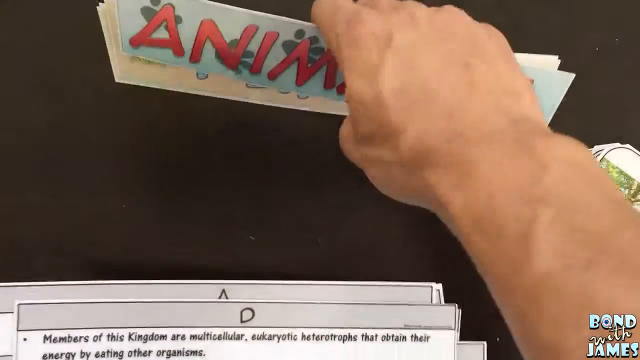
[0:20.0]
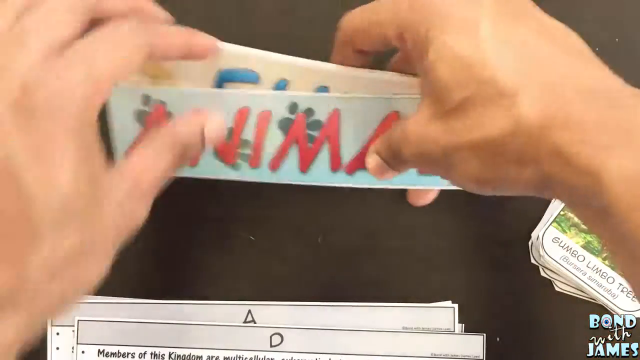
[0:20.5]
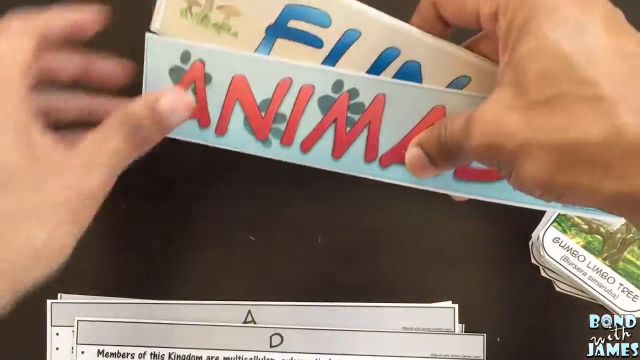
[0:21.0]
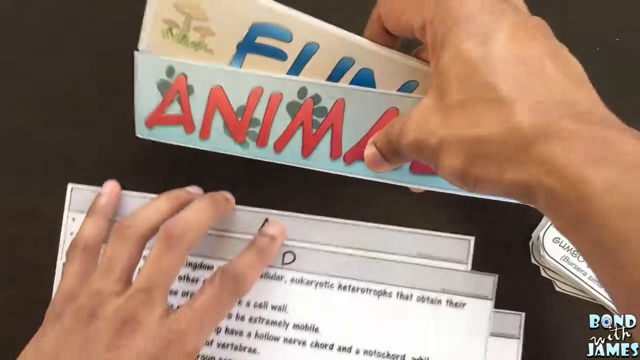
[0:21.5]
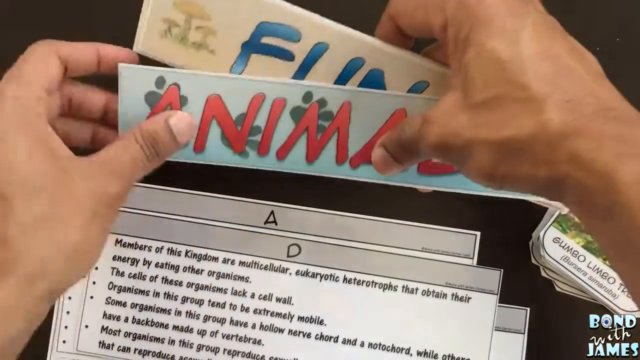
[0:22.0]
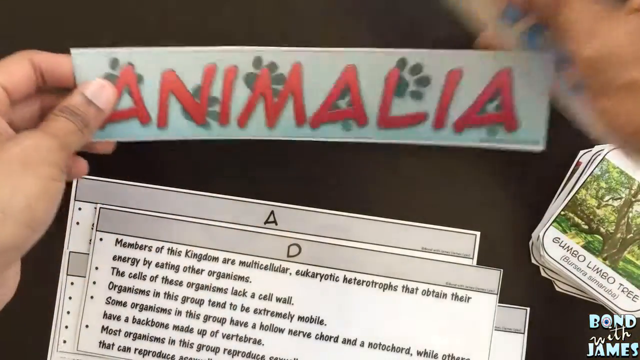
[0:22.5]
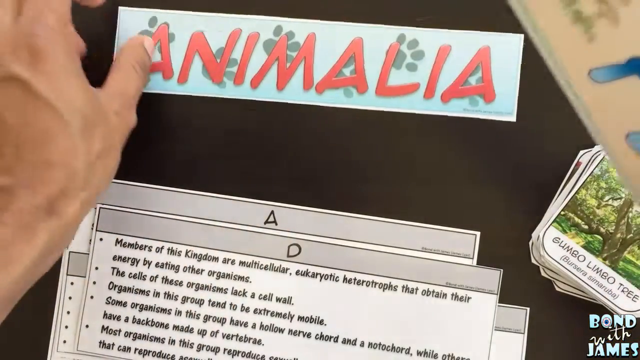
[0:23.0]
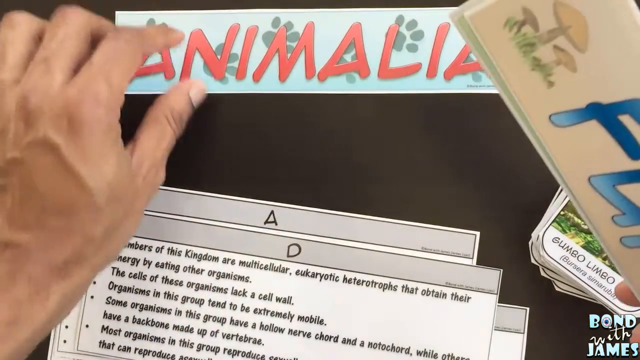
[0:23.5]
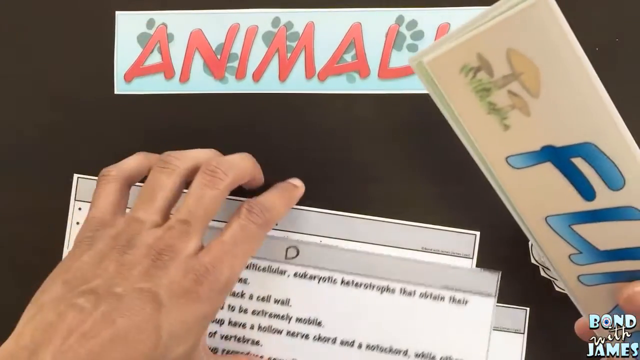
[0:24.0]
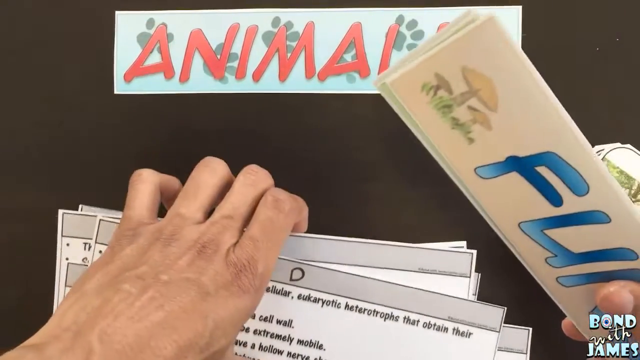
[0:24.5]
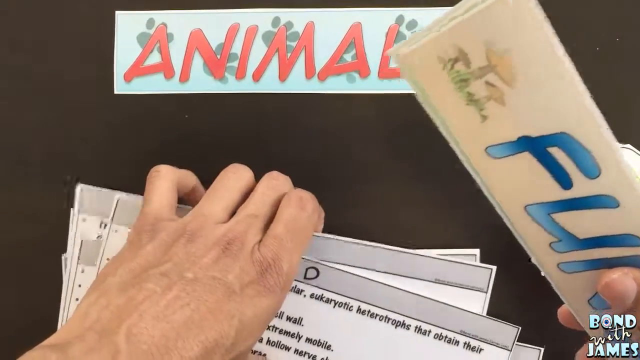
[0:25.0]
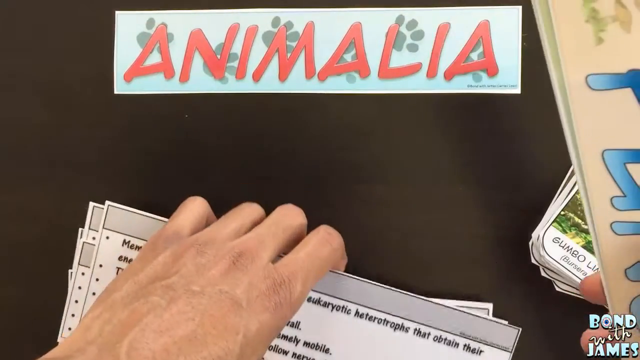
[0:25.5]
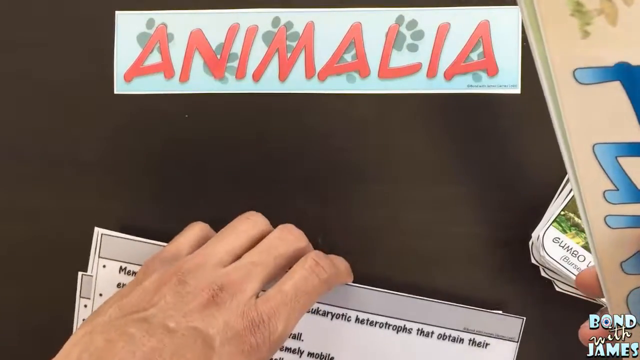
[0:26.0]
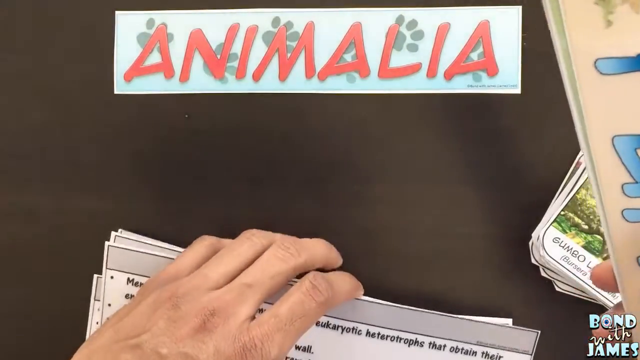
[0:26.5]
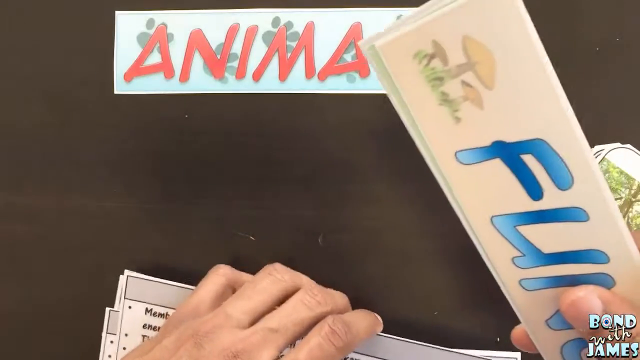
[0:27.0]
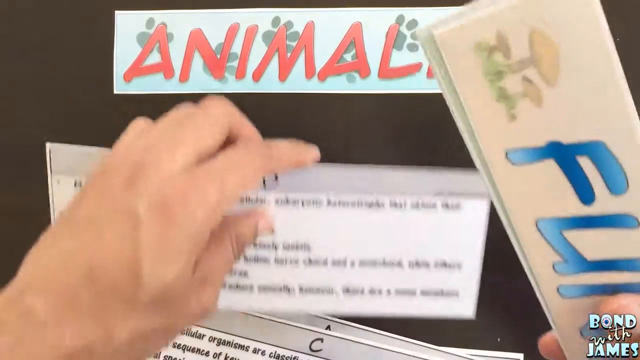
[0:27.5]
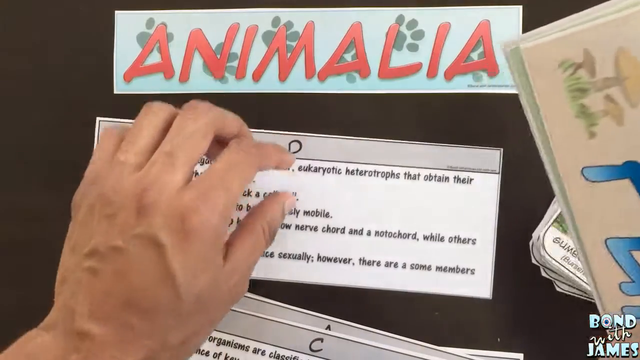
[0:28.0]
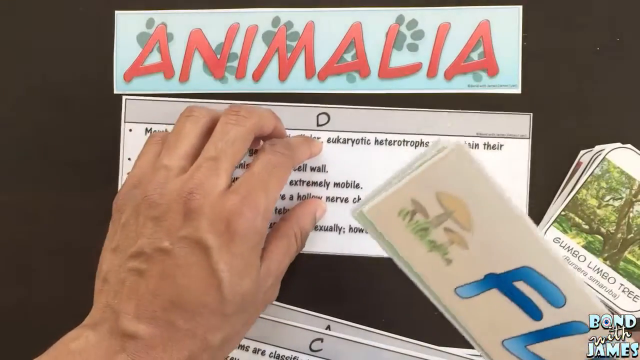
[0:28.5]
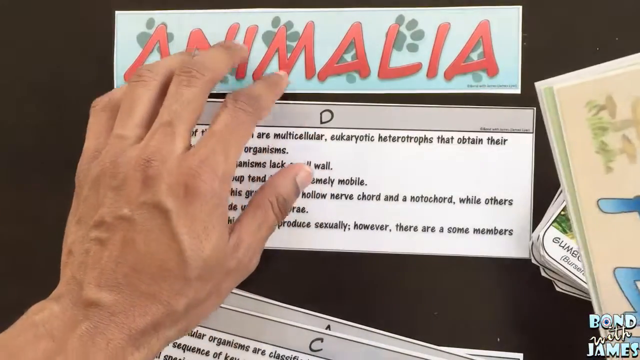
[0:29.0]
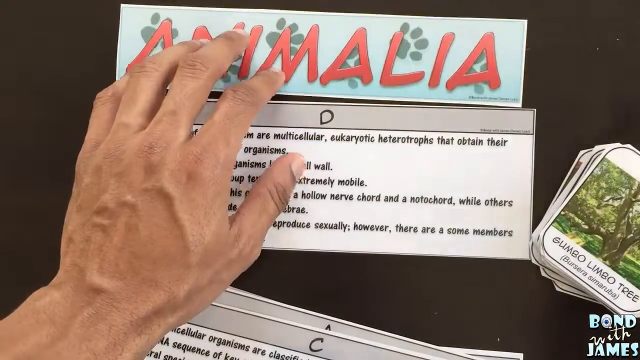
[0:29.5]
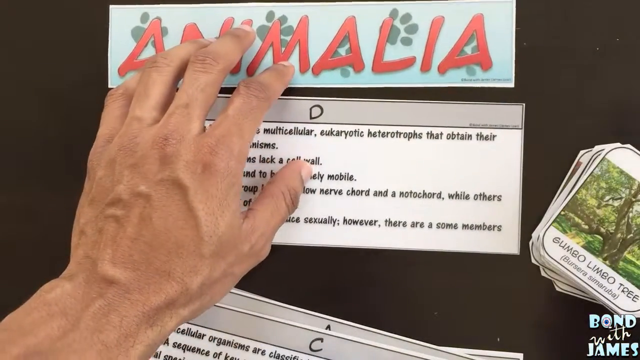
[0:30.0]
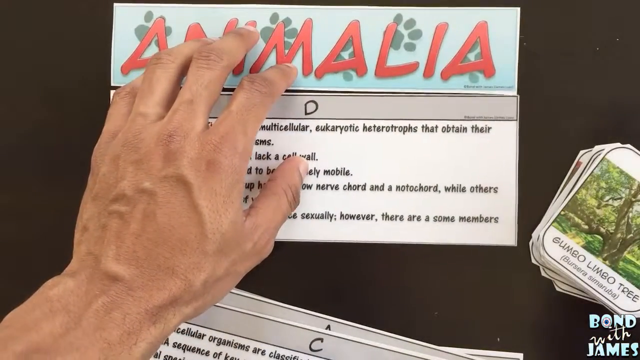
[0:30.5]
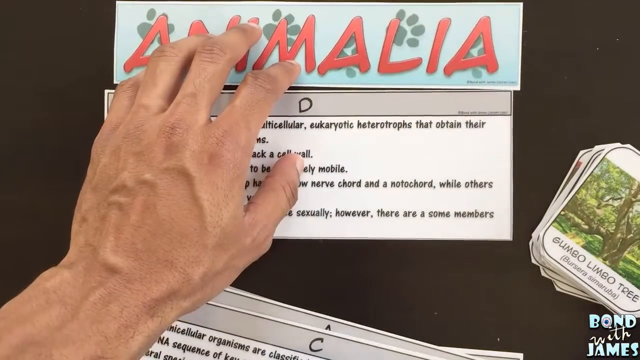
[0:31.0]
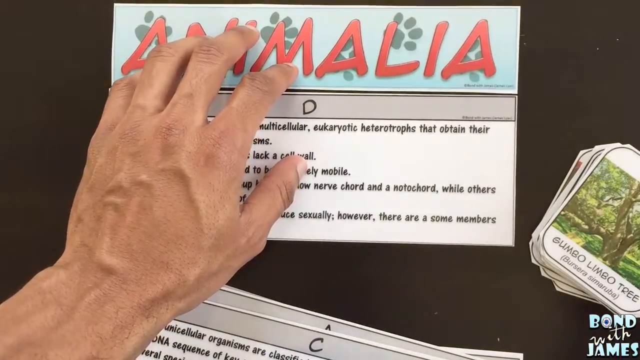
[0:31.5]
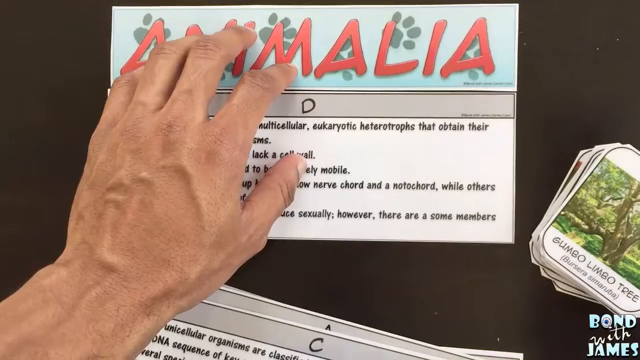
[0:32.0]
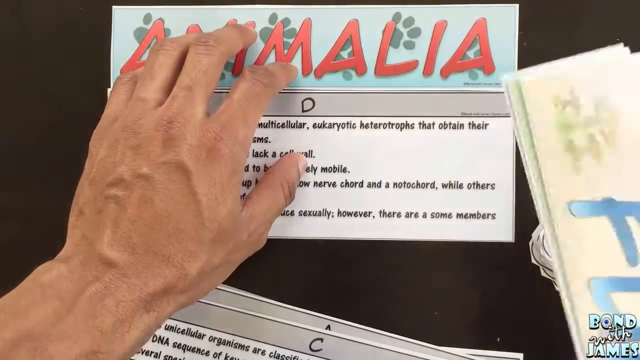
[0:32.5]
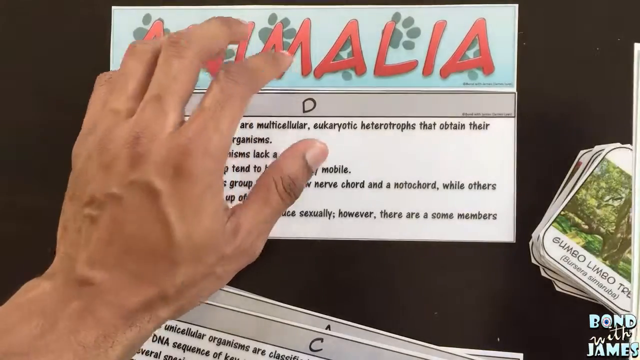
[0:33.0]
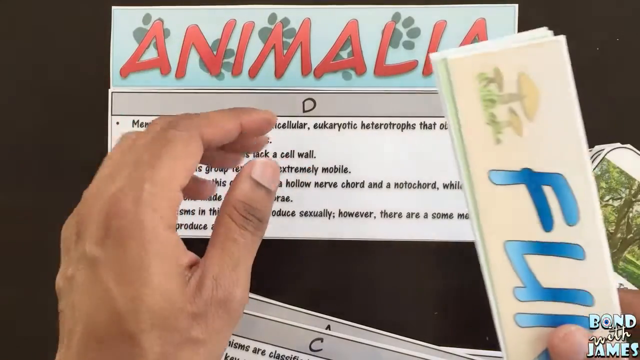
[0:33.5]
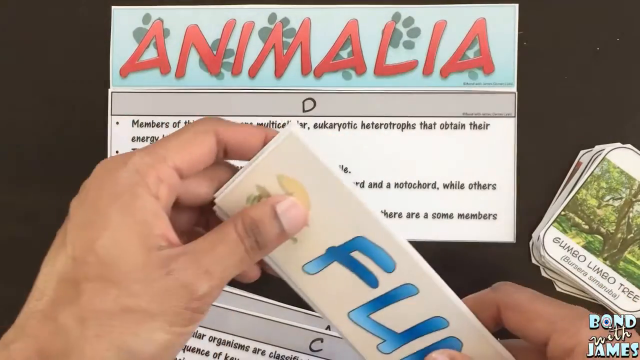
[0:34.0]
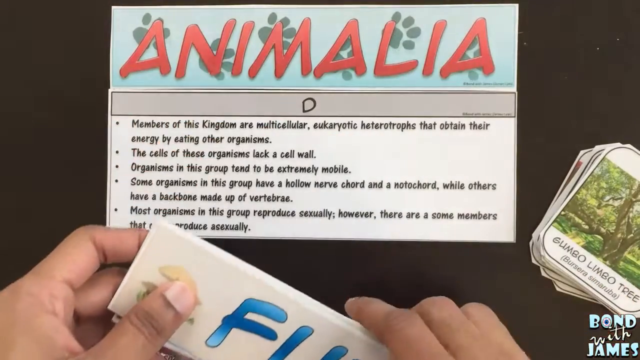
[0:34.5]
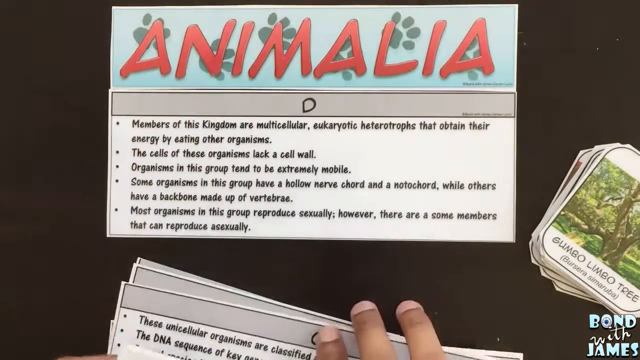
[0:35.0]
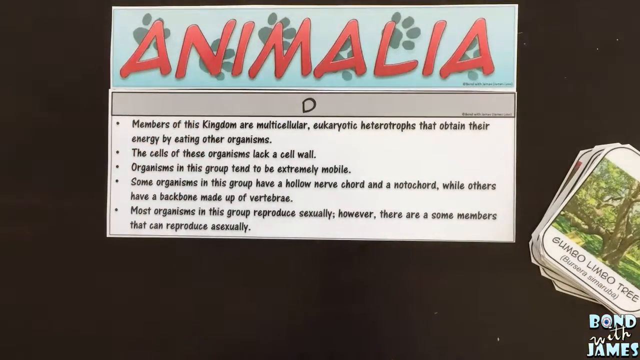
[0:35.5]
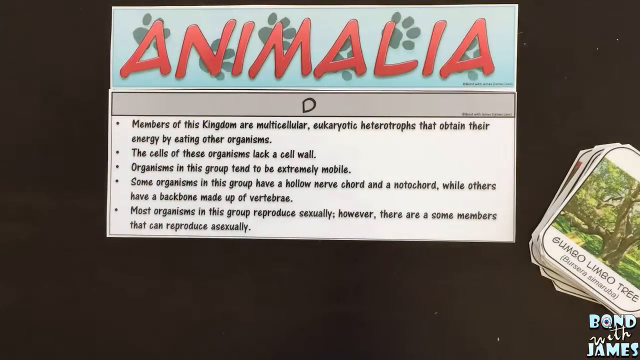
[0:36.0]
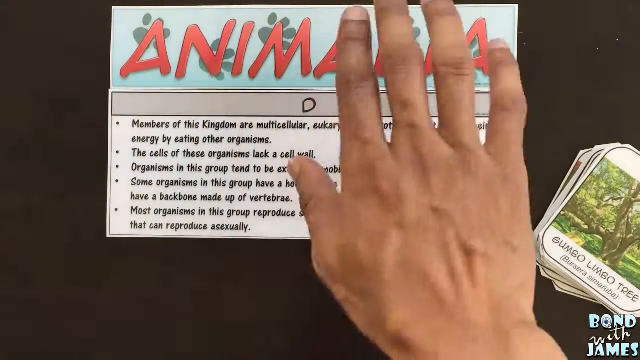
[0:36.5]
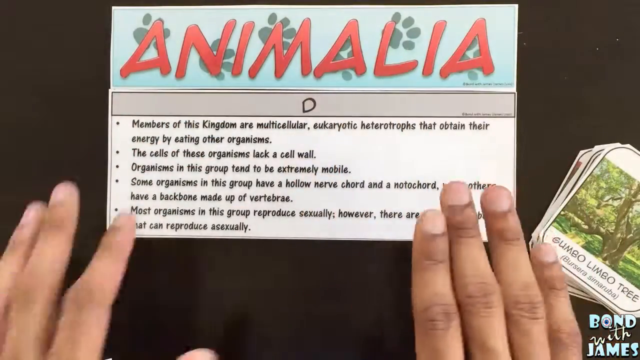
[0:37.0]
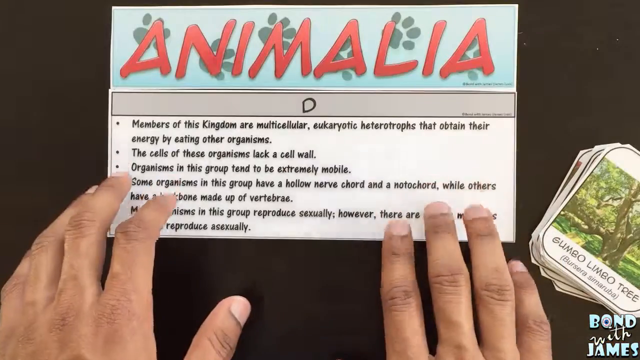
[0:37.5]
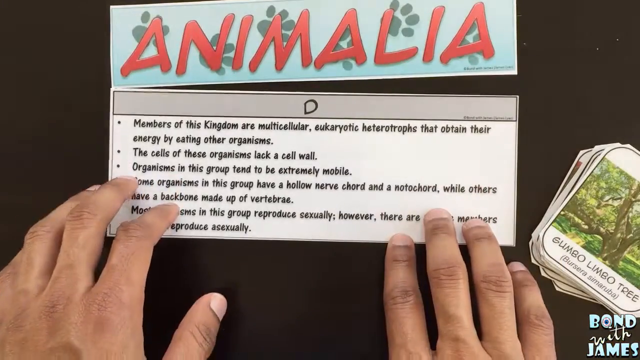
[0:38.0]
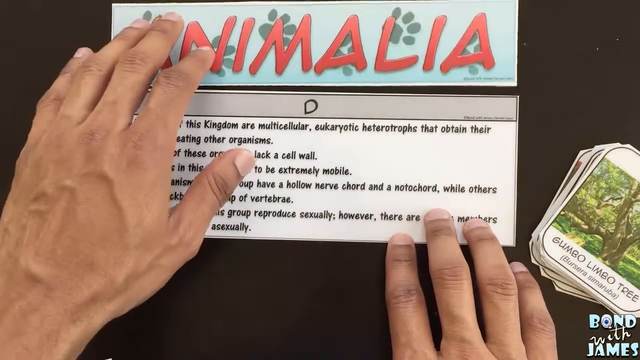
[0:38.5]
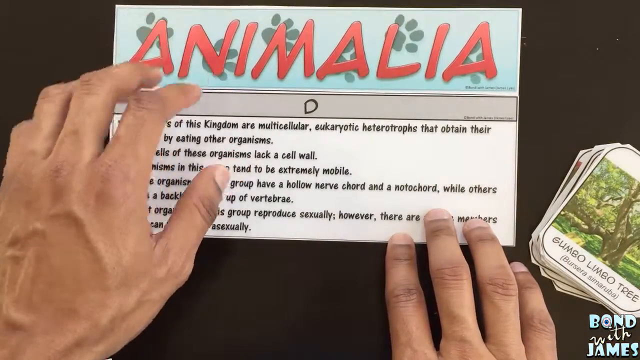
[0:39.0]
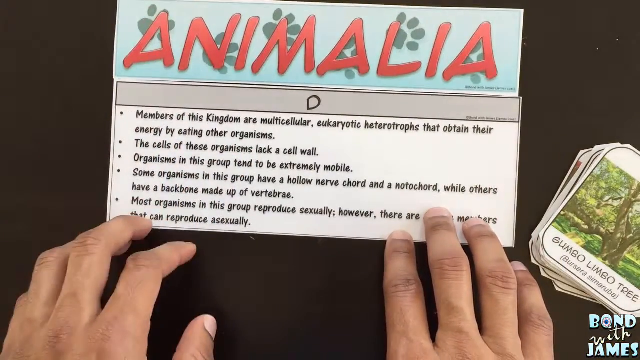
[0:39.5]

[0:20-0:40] Different papers are on the table, and only a man's hands are visible. In his left hand he appears to be holding colorful papers. One of them reads "animalia" in red on a blue background with a black cat footprint. He puts it down on the table, takes another paper and puts the two together. That paper is black and white and labeled D, and it reads: "members of this kingdom are multicellular eukaryotic heterotrophs that obtain the energy by eating other organisms", "the cells of these organisms lack a cell wall", "organisms in this group tend to be extremely mobile", and "most organisms in this group reproduce sexually however there are some members that reproduce asexually". The man then holds the two papers with both hands.